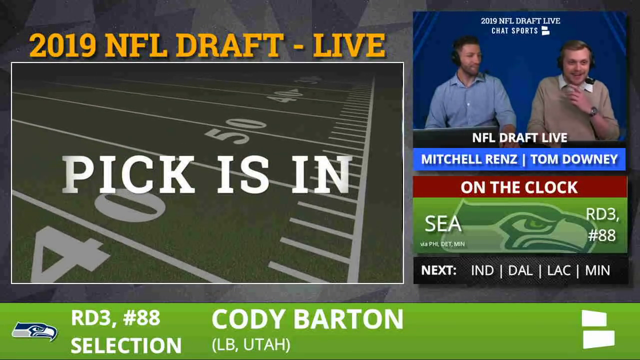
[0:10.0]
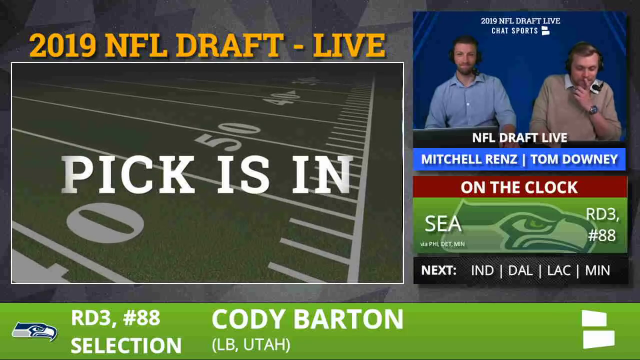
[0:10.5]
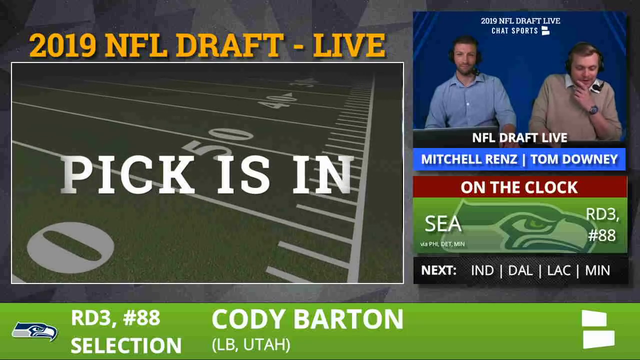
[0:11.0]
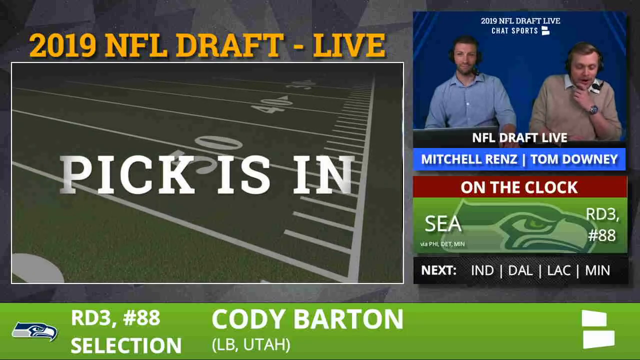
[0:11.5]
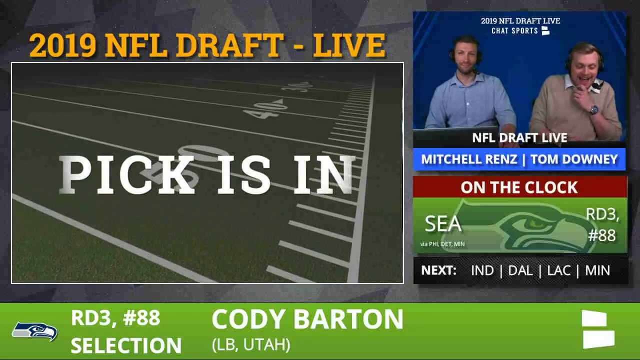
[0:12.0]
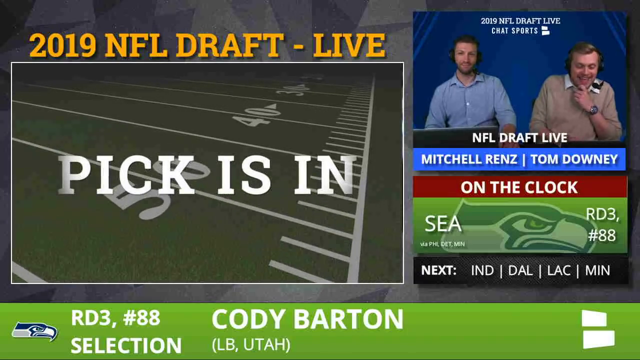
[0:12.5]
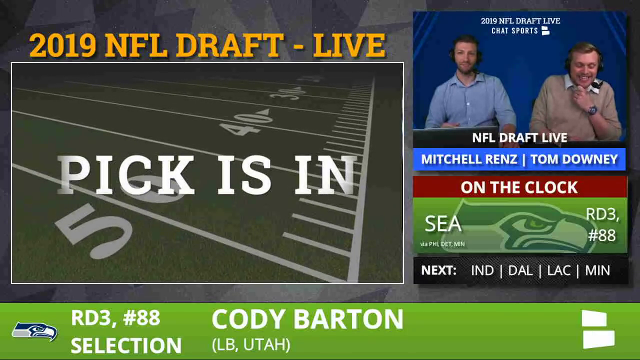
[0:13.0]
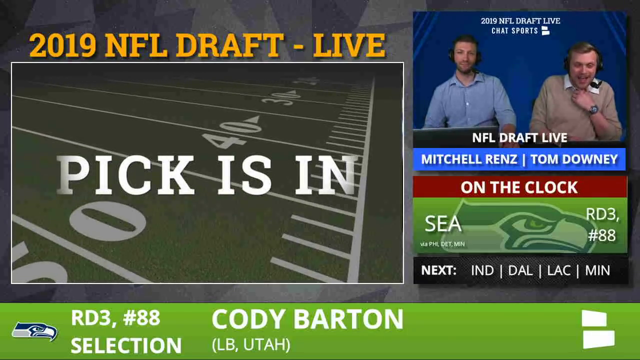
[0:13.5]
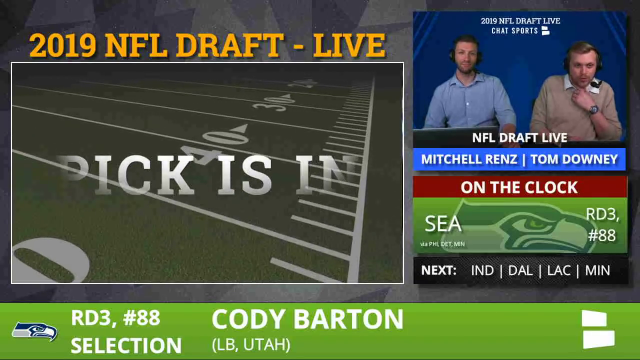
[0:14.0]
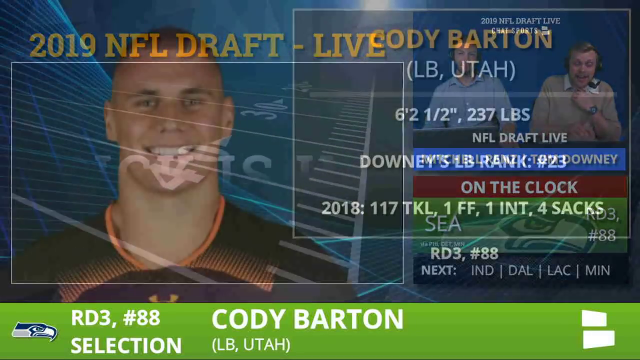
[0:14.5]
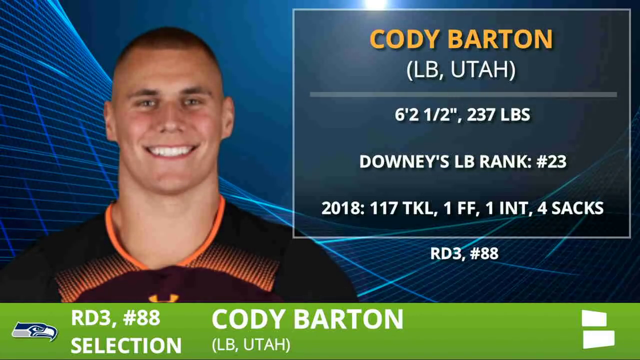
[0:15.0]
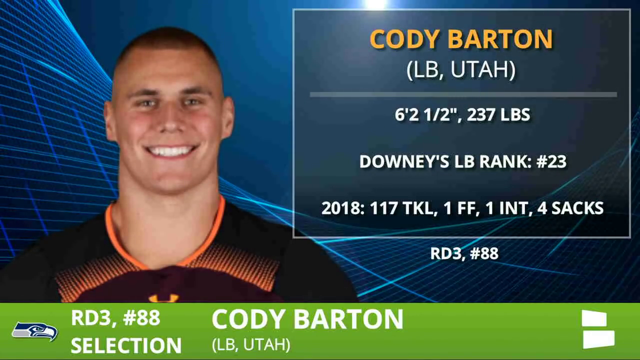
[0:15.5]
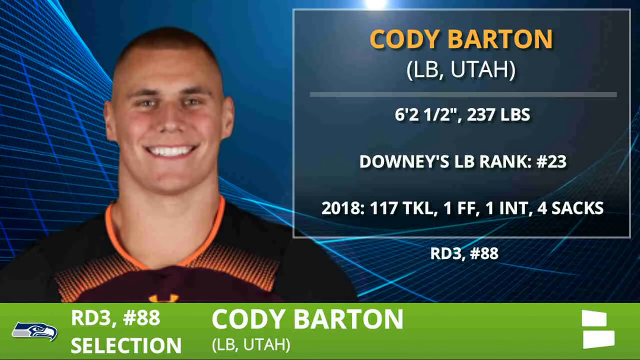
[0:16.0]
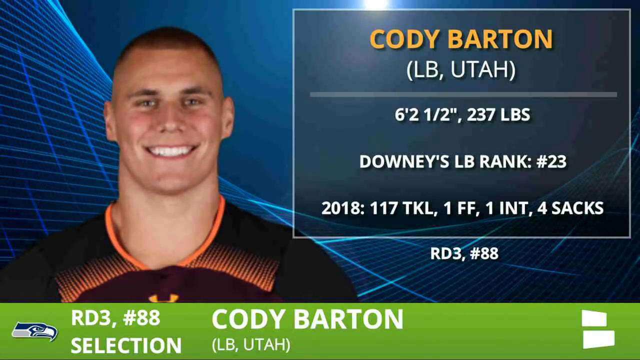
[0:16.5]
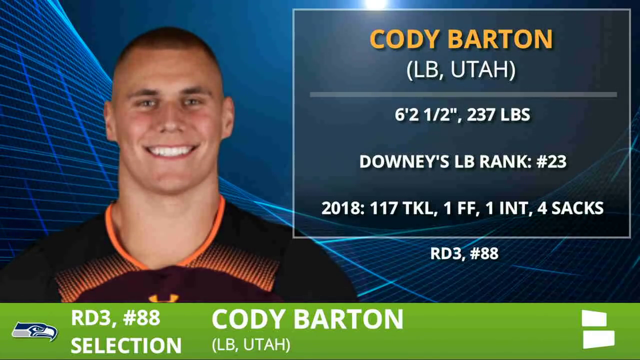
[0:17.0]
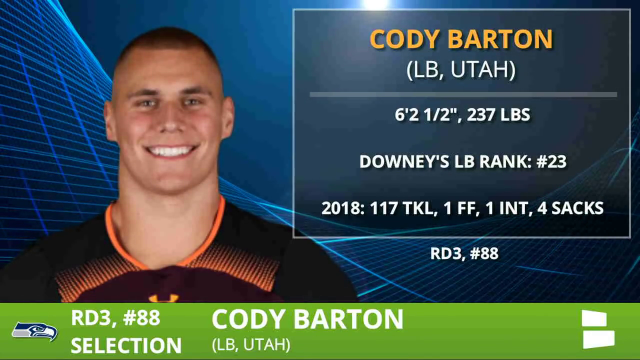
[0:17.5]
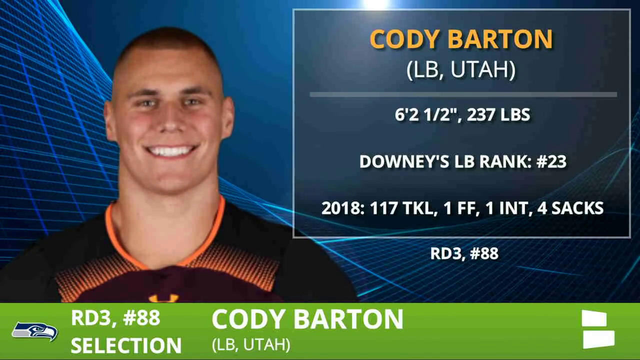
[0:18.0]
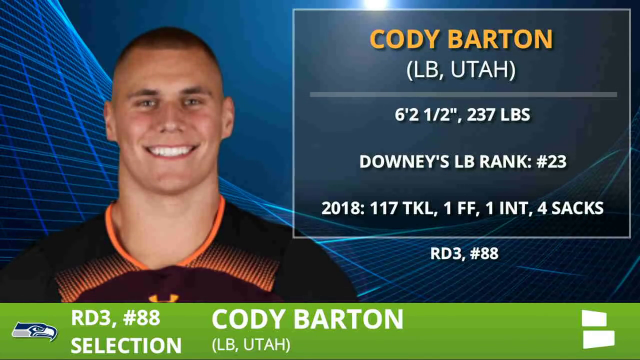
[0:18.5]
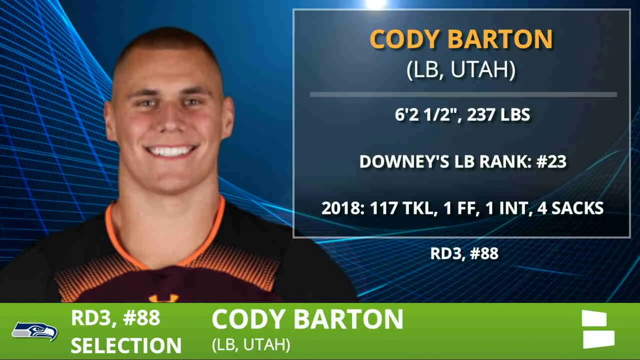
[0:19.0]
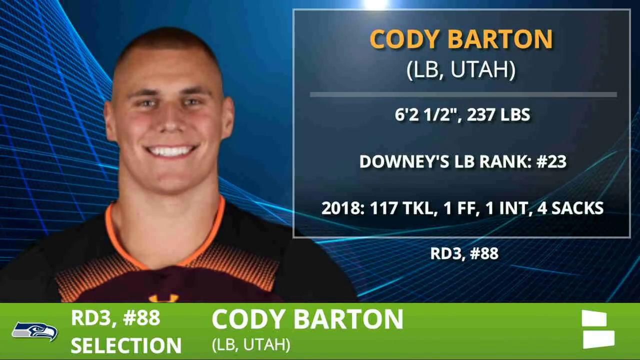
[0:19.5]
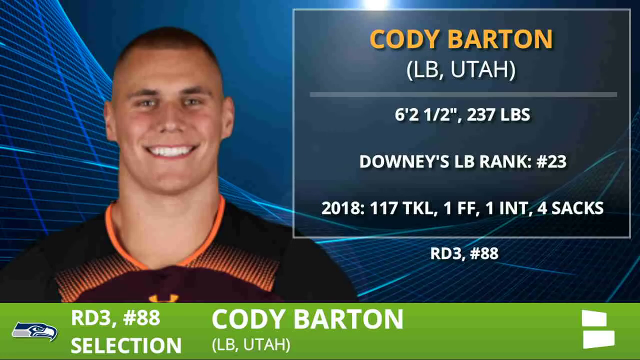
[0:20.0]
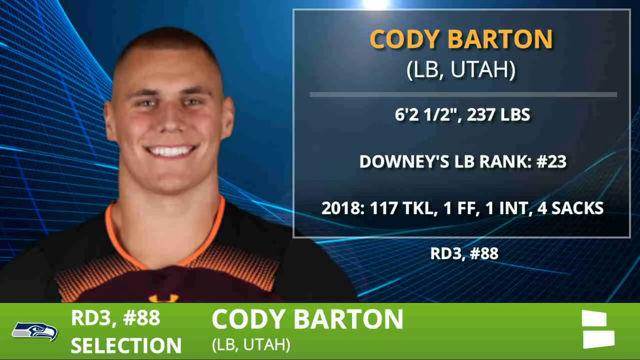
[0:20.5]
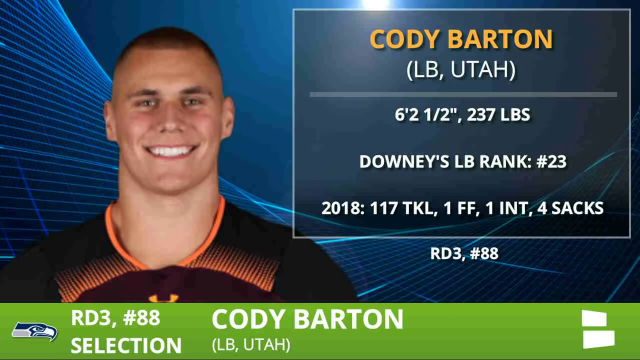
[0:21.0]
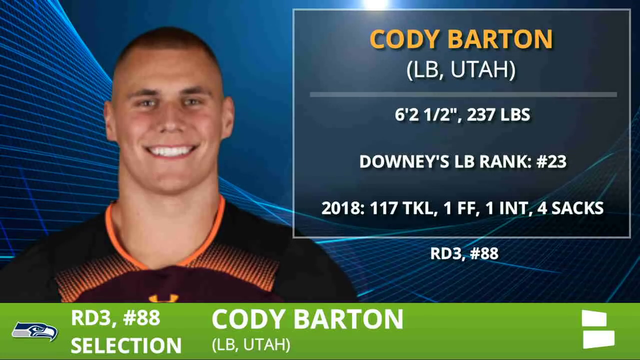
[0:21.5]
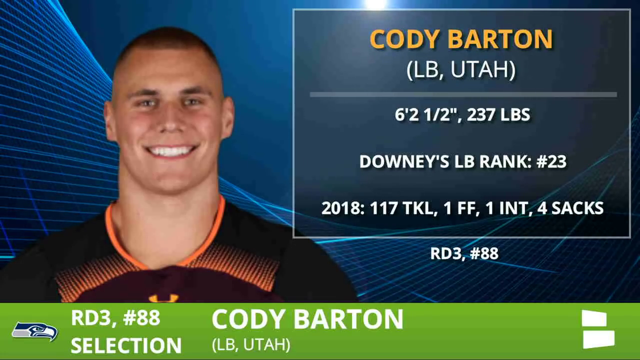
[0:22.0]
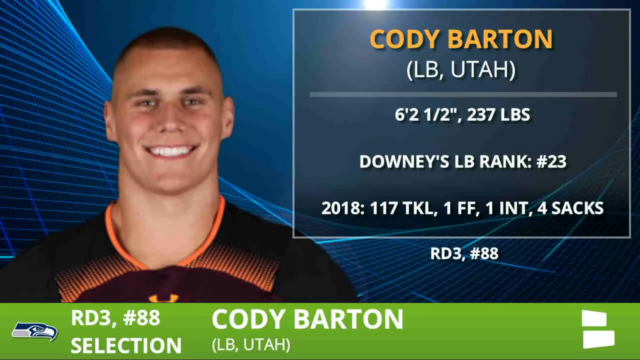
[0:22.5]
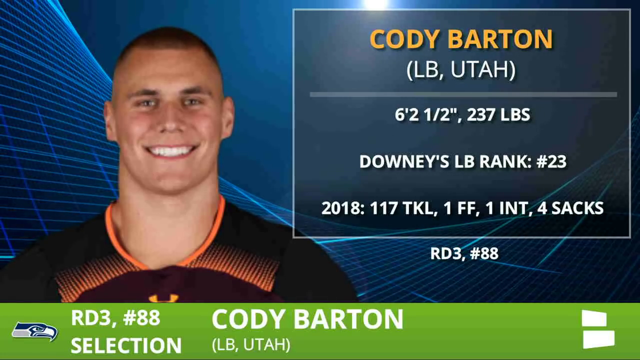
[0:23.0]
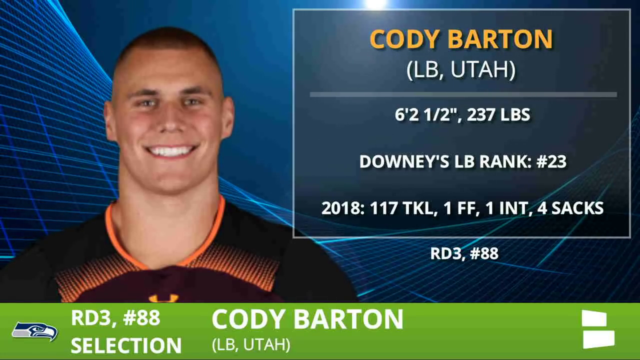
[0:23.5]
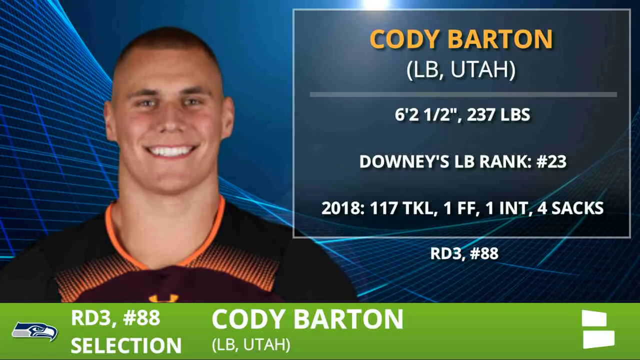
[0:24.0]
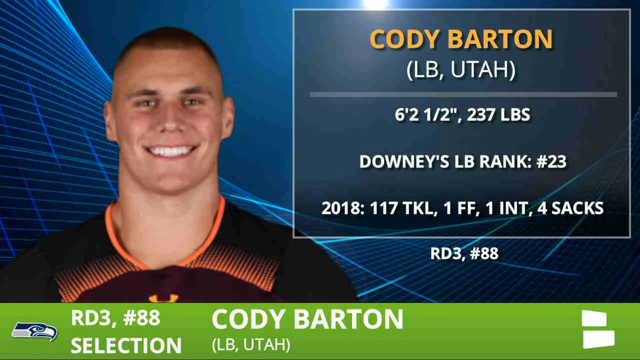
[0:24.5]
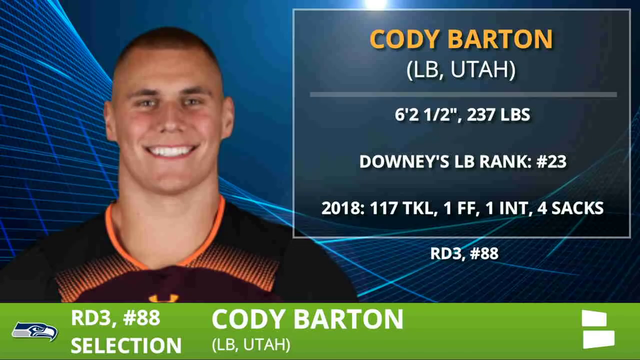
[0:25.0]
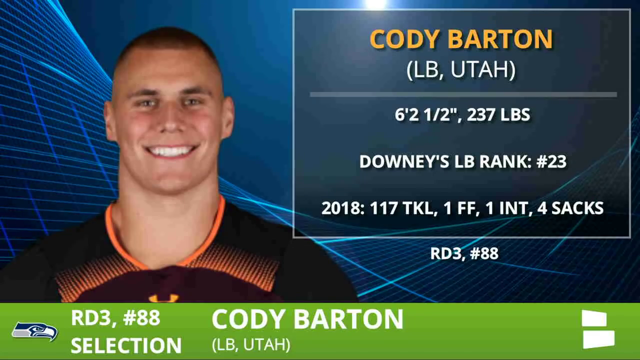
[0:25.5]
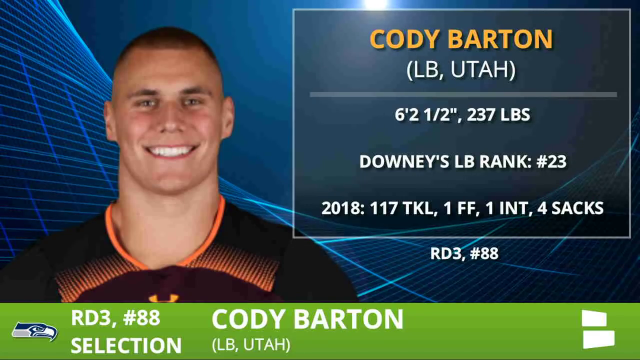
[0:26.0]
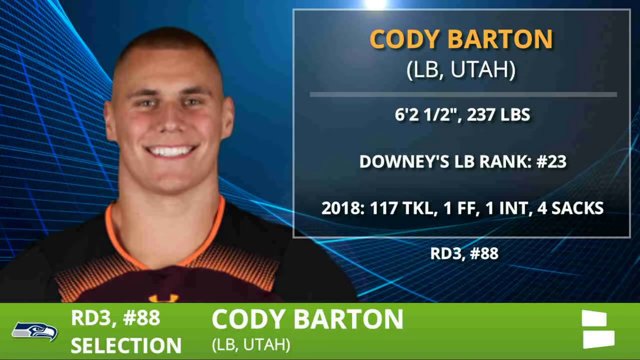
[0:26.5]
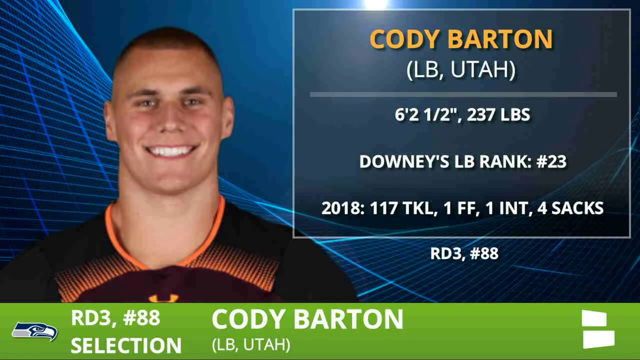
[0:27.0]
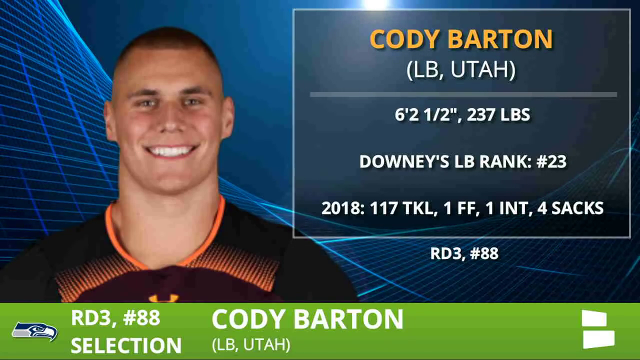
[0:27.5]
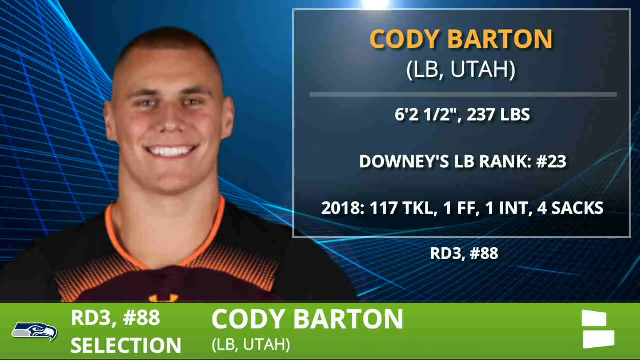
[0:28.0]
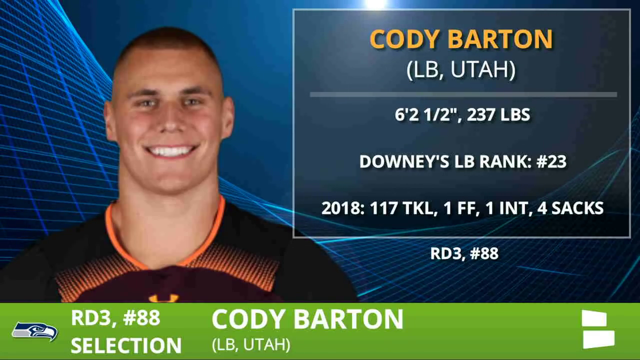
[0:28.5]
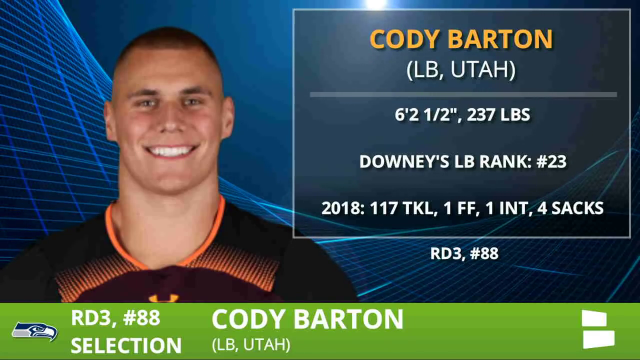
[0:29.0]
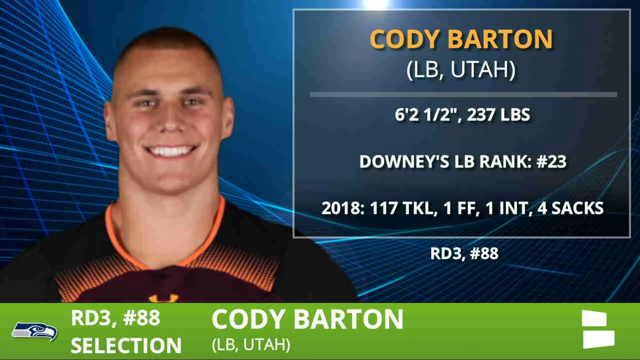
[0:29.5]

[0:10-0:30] The top left of the screen reads "2019 NFL Draft - live", and the screen is split into several areas: two people talk live in the top right, and a prominent box on the left says "pick is in". Inside this box the camera moves upwards over what looks like the markings of a football field, with the numbers 40, 30 and 20 passing. The "pick is in" text starts to disappear, and an image with text then covers the whole screen. On the left is a still image of what is presumably a football player, seen from the shoulders up, with a big smile, short shaved hair, looking straight on. He wears what looks like a black and mauve jersey with some orange around the collar and some orange lines on it. To his right, yellow text reads "Cody Barton", with "(LB Utah)" below it, possibly meaning linebacker, followed by stats in white: six foot two, one and a half inches, 237 lbs; "Downey's LB rank: #23"; "2018: 117 tackles, 1FF, 1INT, 4 sacks"; and below that "RD3 #88". The text at the bottom of the screen says "Cody Barton".